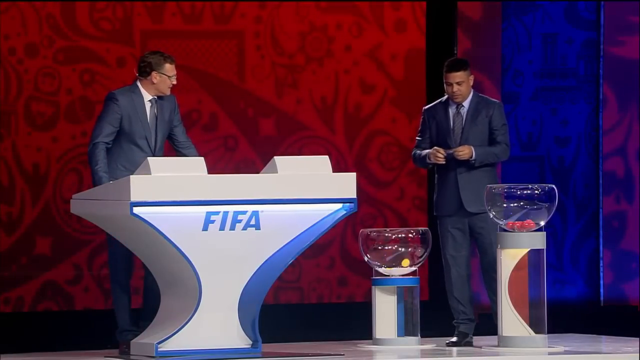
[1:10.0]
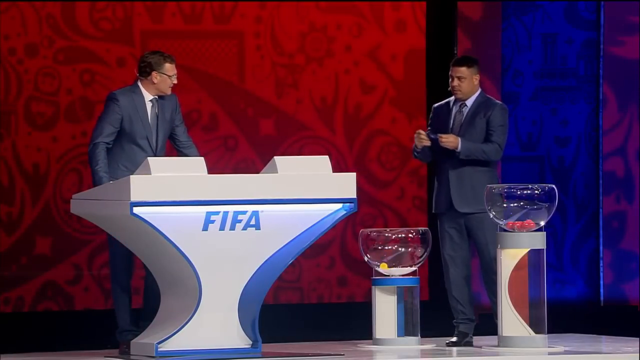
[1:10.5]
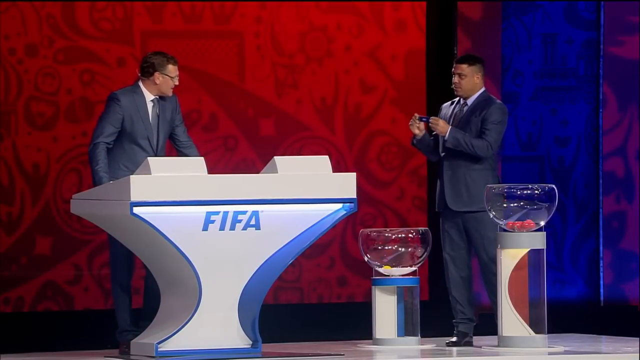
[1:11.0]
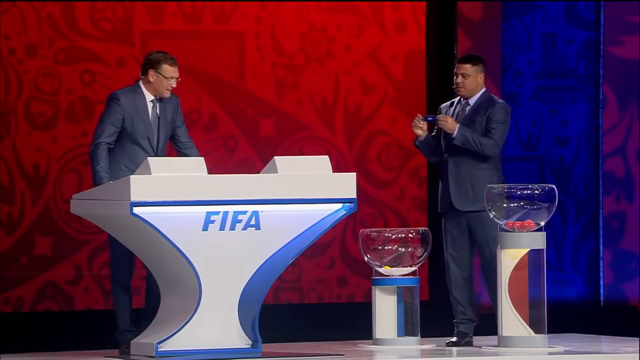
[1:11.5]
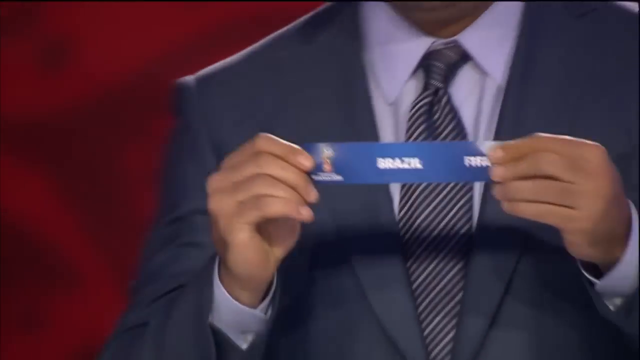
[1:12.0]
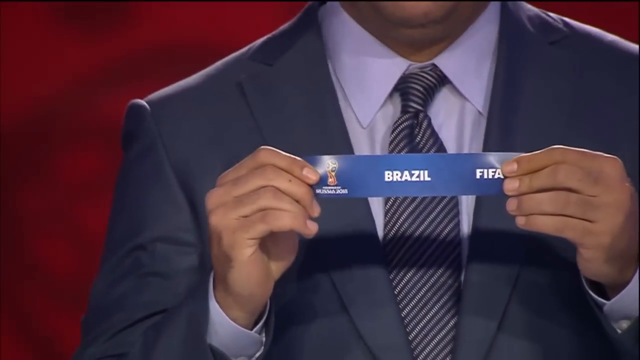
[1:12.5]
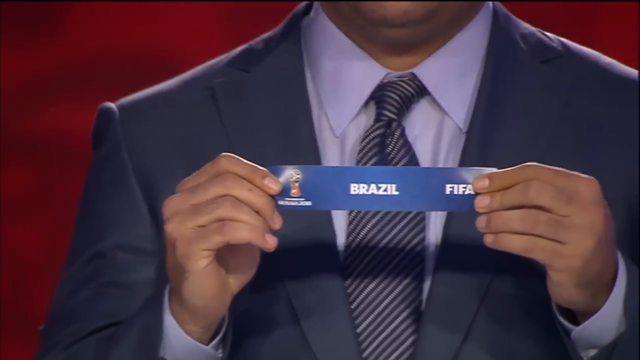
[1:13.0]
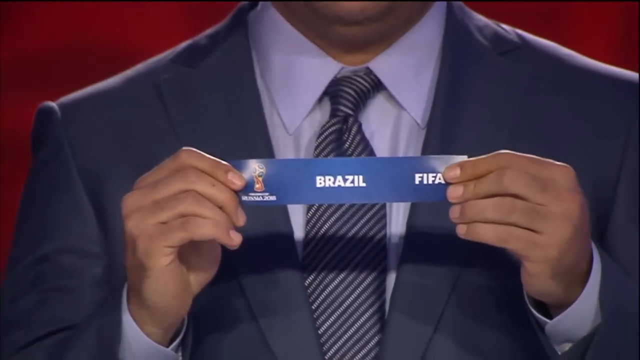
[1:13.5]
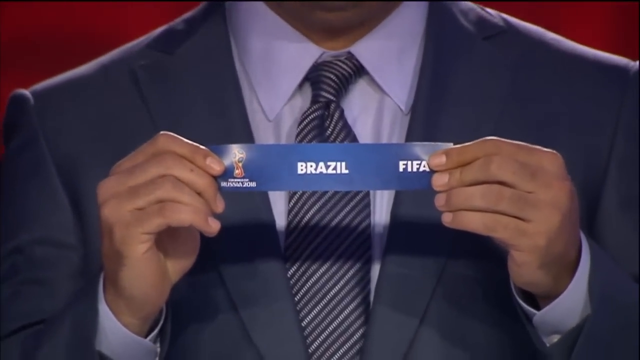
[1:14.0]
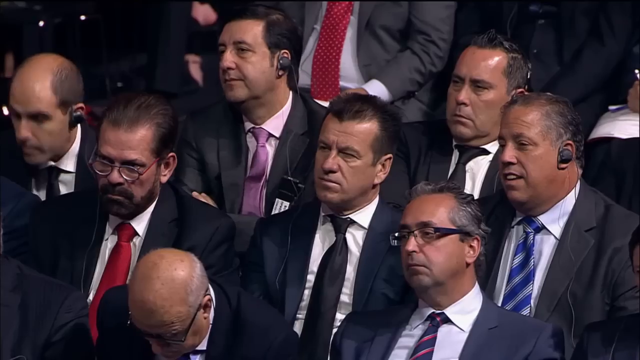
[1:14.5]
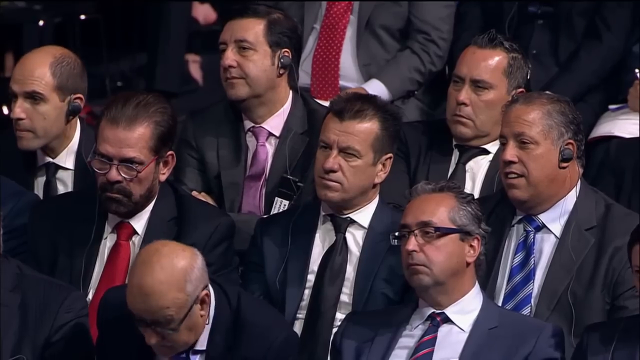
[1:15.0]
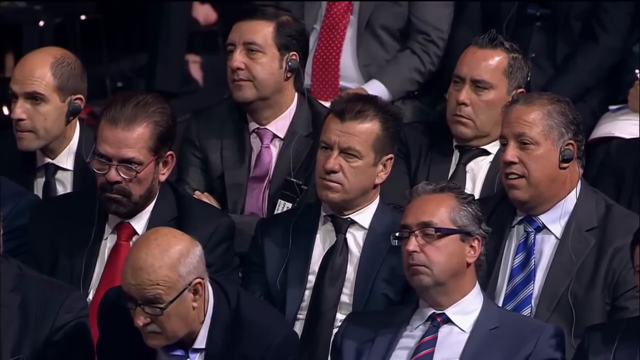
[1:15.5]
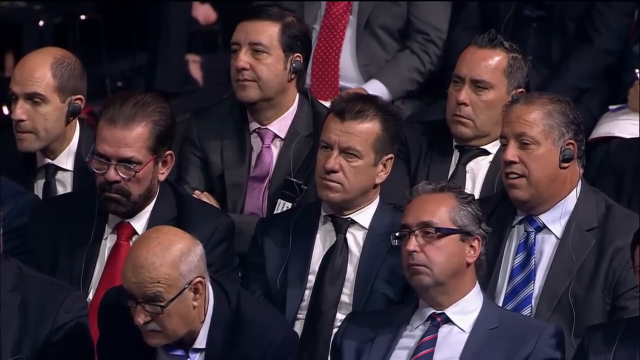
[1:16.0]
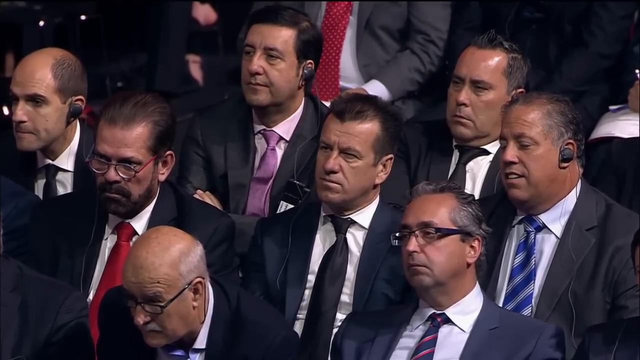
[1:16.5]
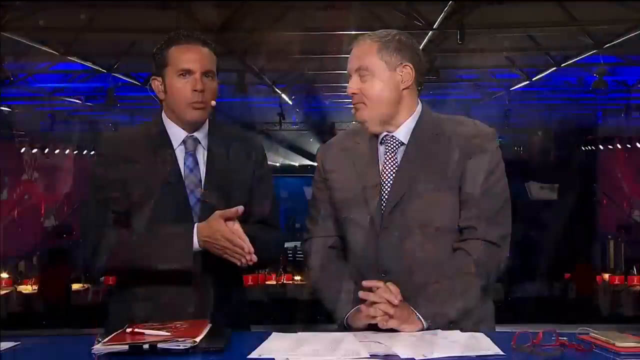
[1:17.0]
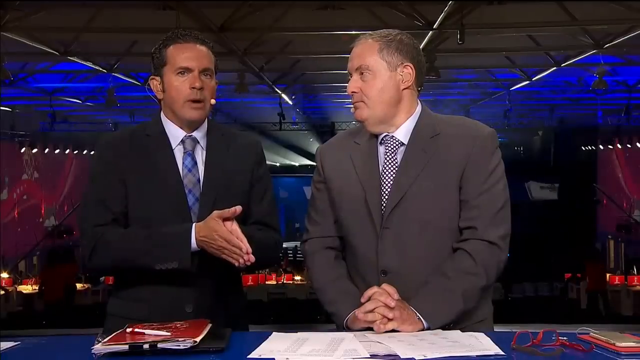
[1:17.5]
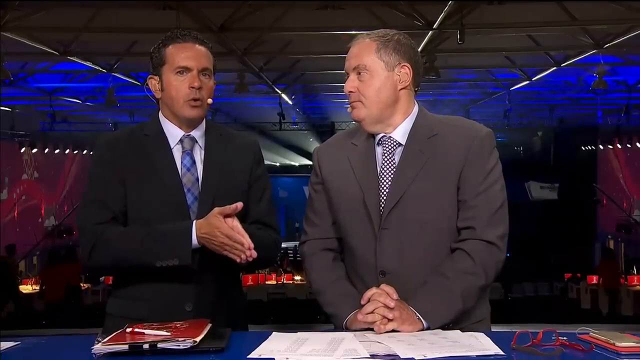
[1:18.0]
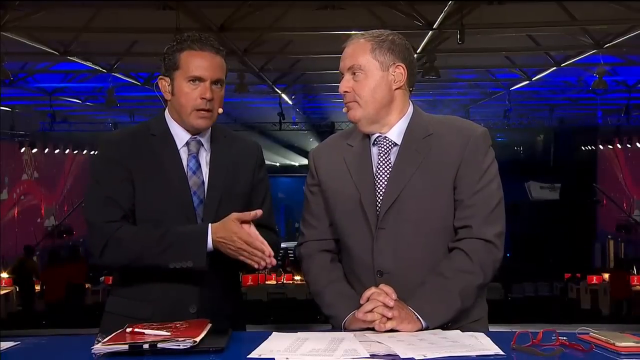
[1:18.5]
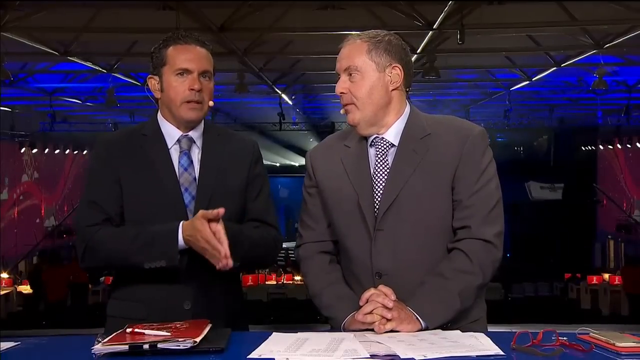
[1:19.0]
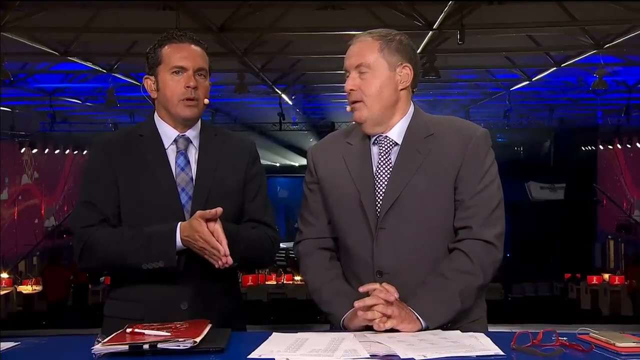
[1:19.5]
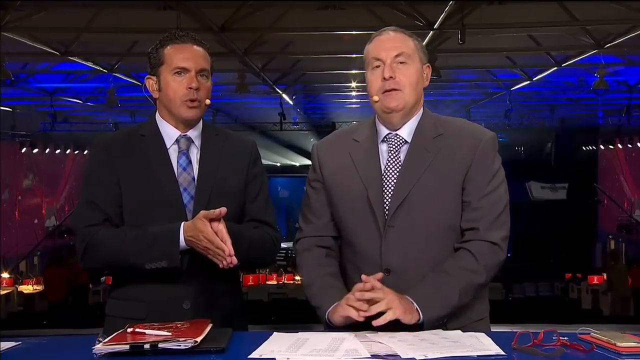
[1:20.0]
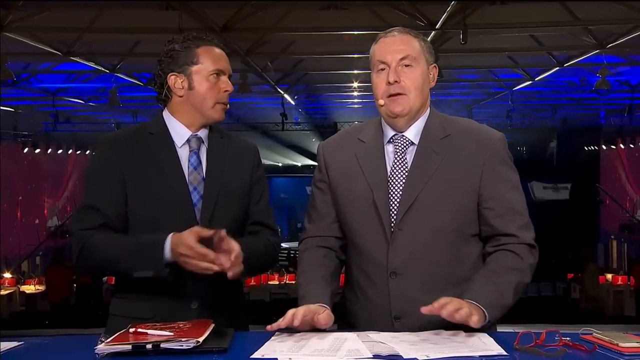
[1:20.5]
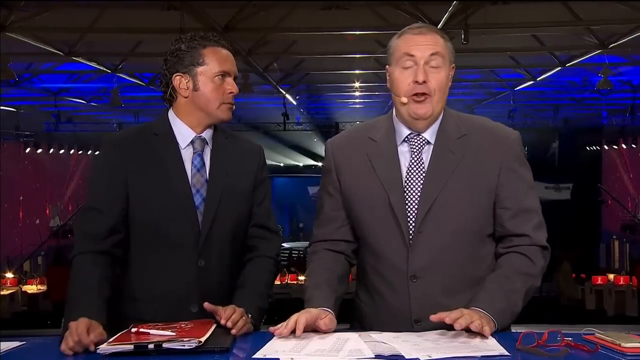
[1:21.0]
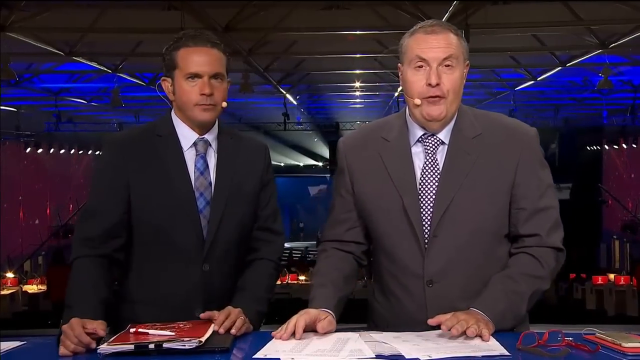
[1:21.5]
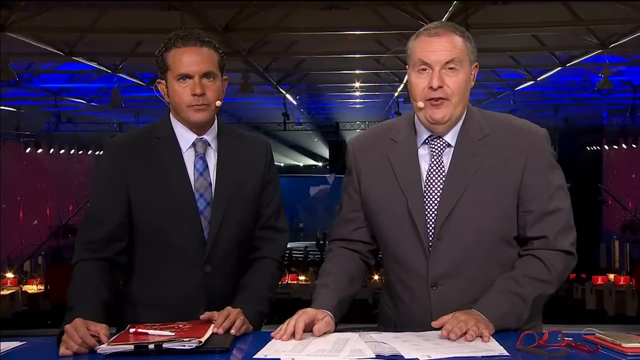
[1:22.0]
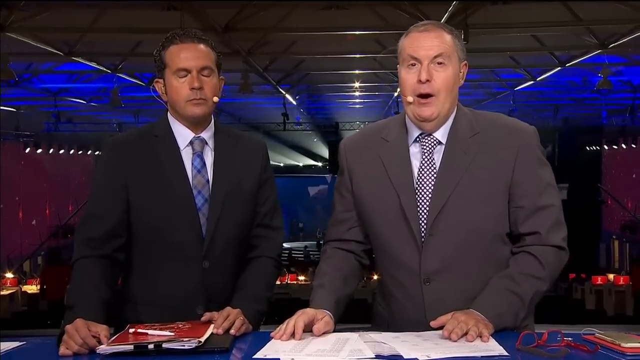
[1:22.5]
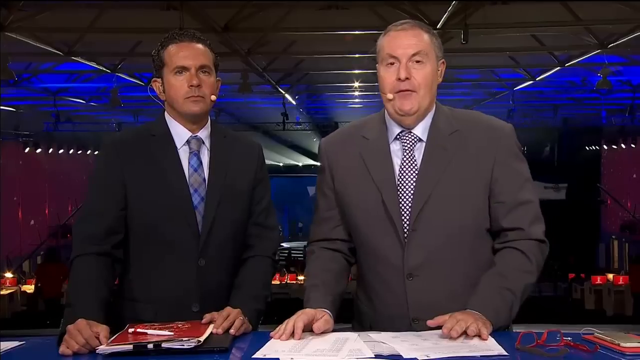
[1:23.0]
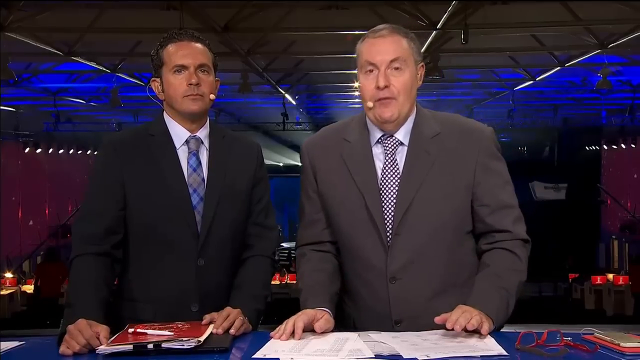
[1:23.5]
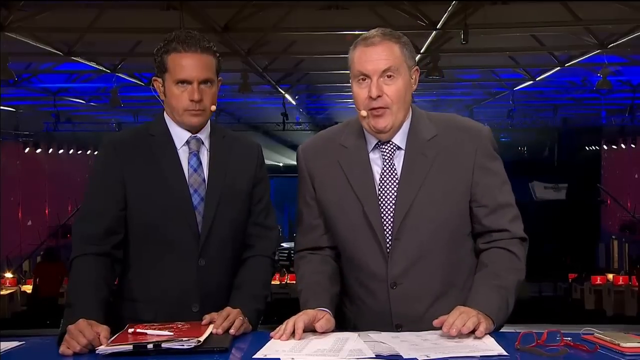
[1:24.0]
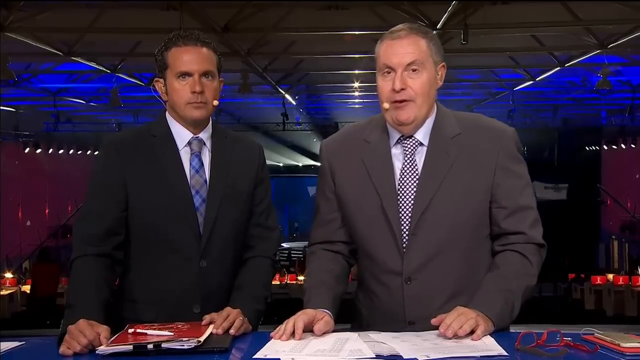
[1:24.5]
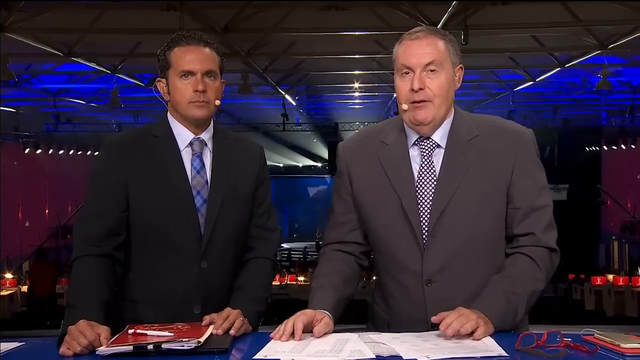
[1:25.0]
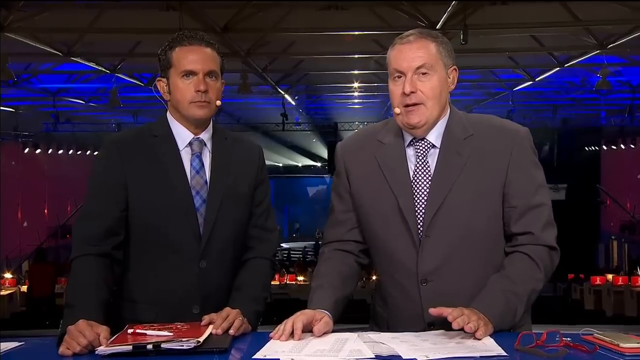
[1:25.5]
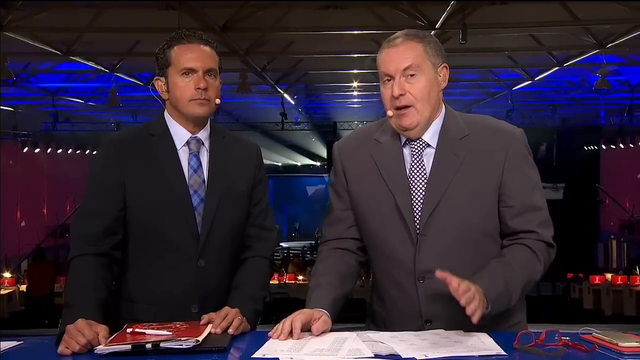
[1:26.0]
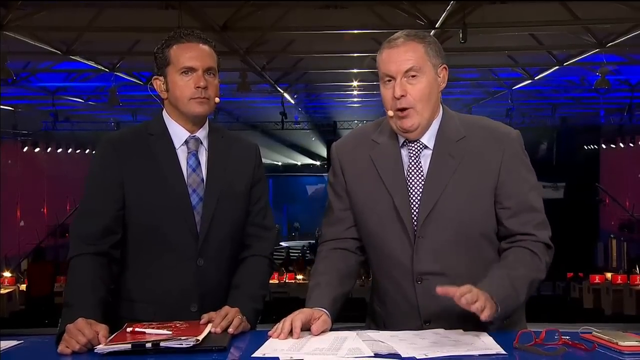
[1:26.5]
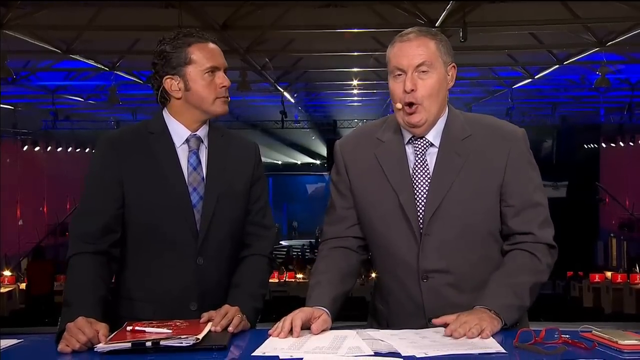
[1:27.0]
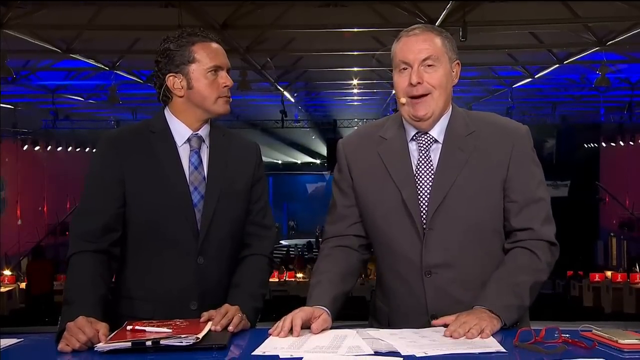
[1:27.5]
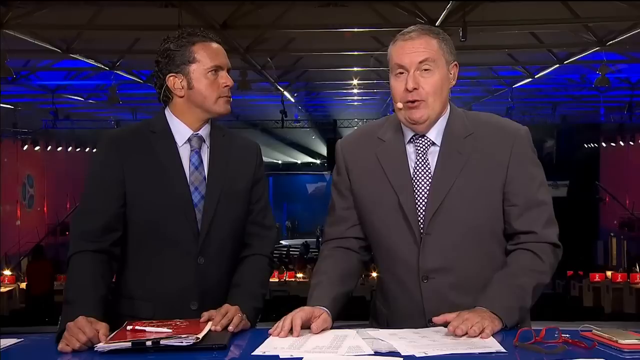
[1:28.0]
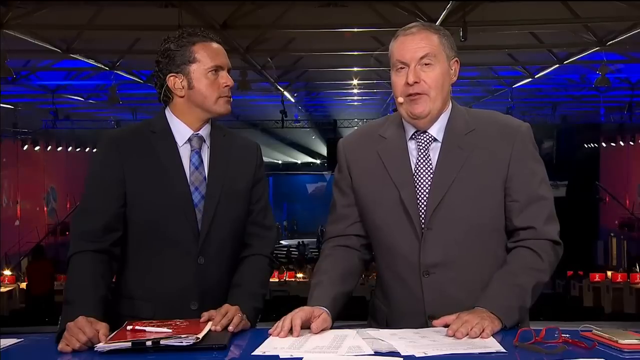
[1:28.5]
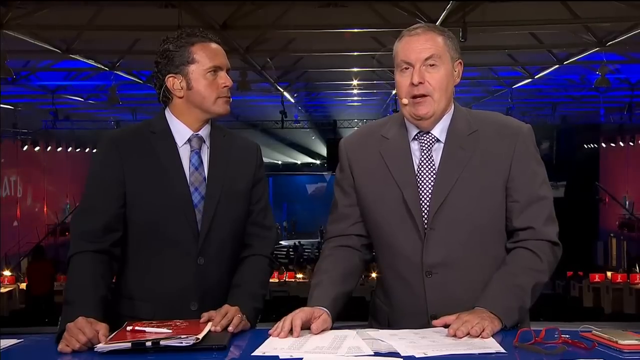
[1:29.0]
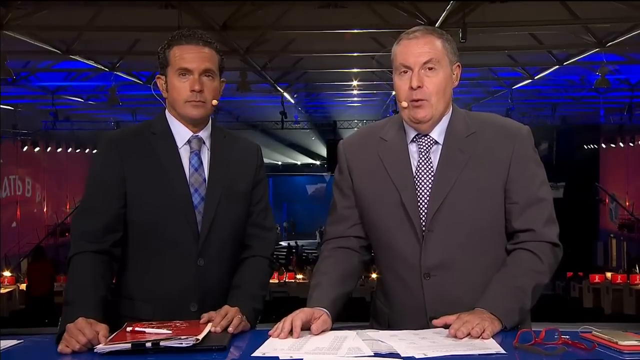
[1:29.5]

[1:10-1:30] In an award type of setting, a man holds up a small blue sign that says "Brazil FIFA". Several men wearing suits and ties are sitting in the audience. Both broadcasters then appear on screen, continually speaking while looking at the camera. The footage is indoors with a good amount of artificial light, and there are several blue FIFA logos. No animals are present. The video is in a rectangular shape, of good quality, with smooth transitions.